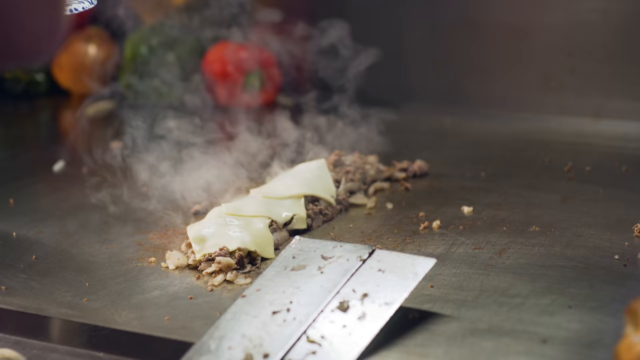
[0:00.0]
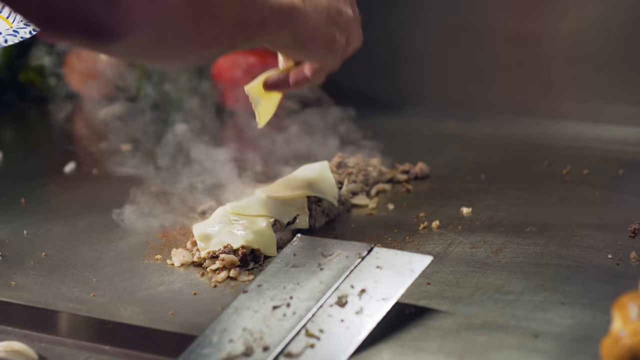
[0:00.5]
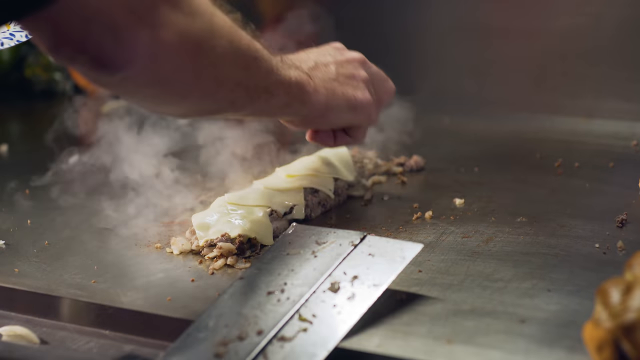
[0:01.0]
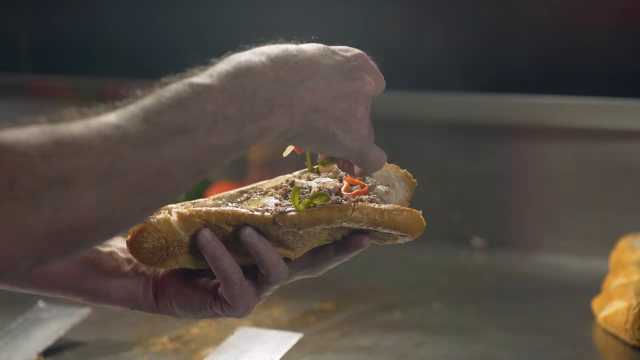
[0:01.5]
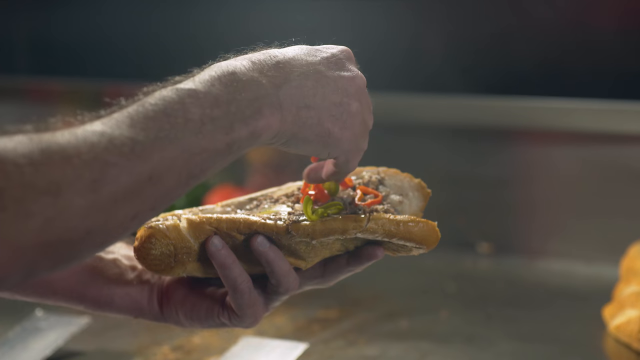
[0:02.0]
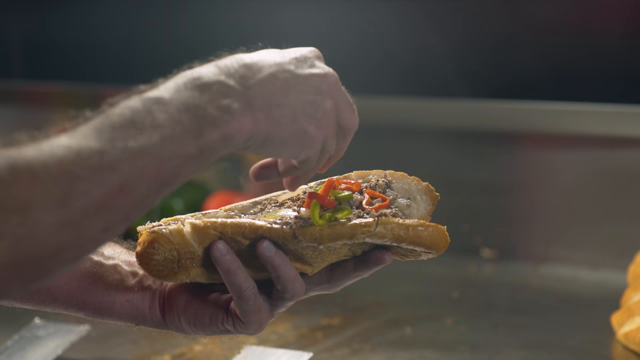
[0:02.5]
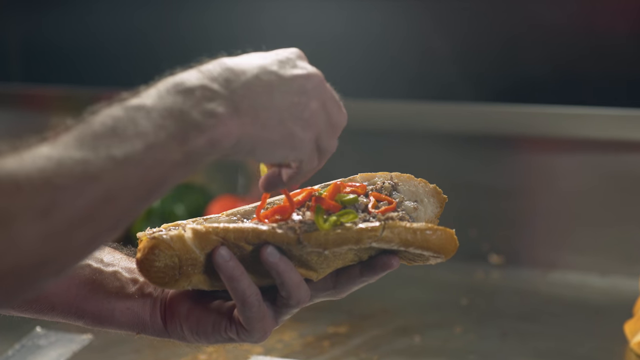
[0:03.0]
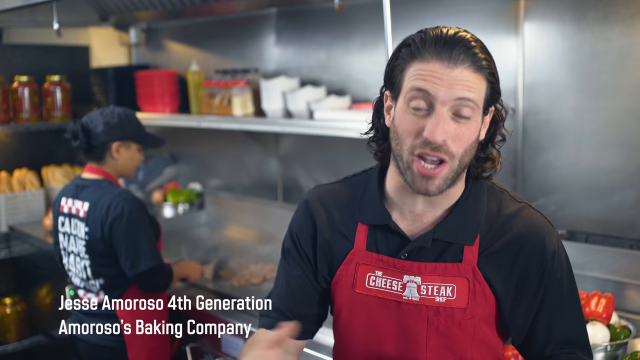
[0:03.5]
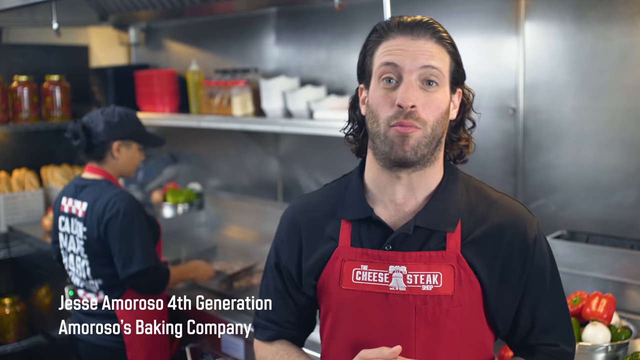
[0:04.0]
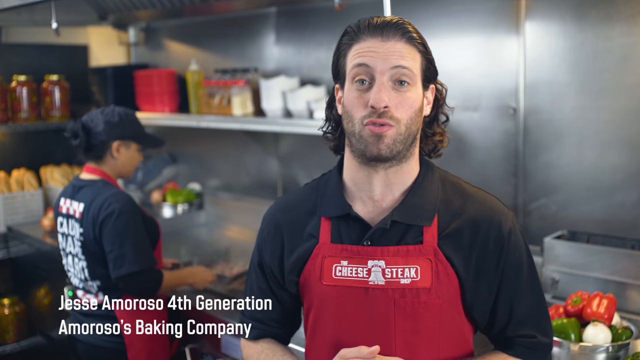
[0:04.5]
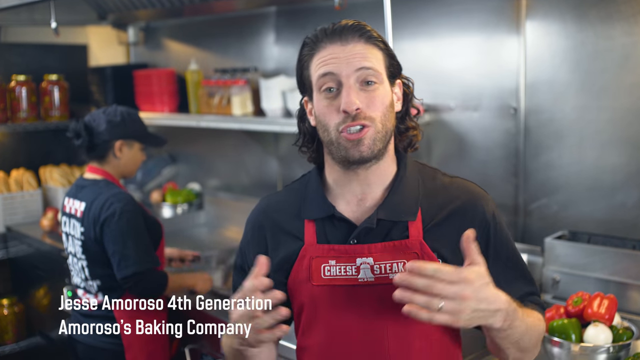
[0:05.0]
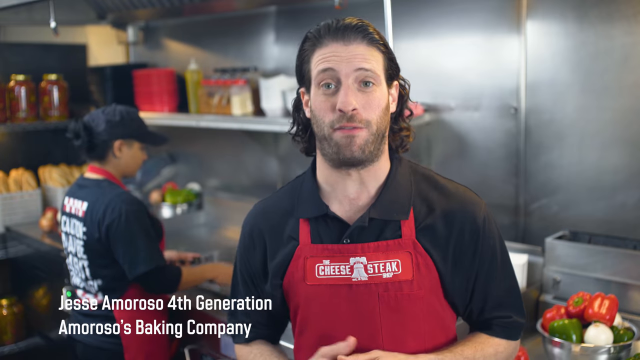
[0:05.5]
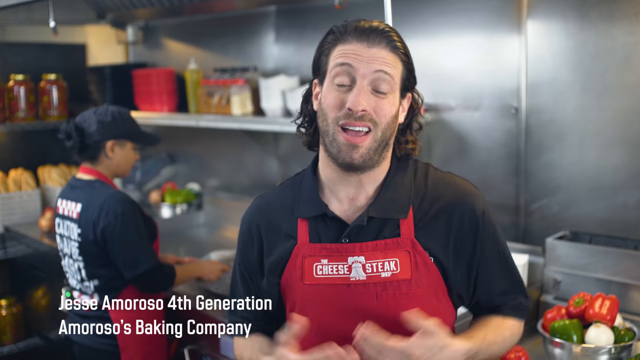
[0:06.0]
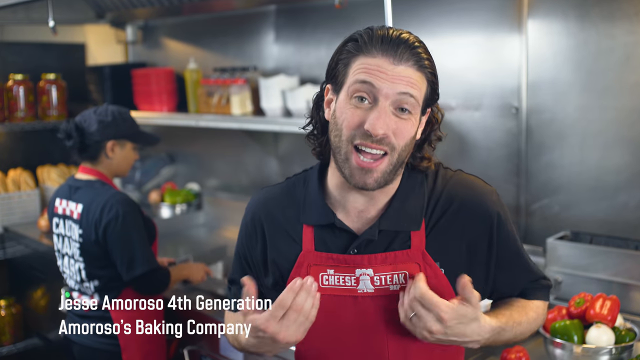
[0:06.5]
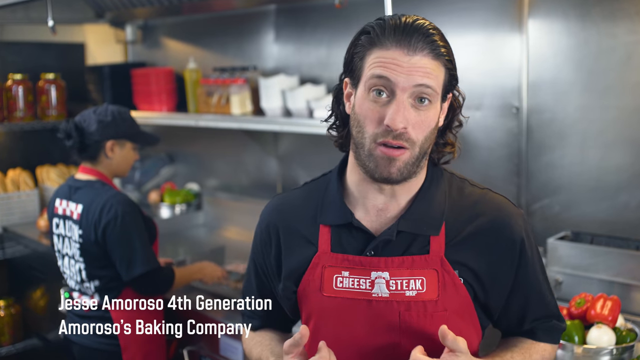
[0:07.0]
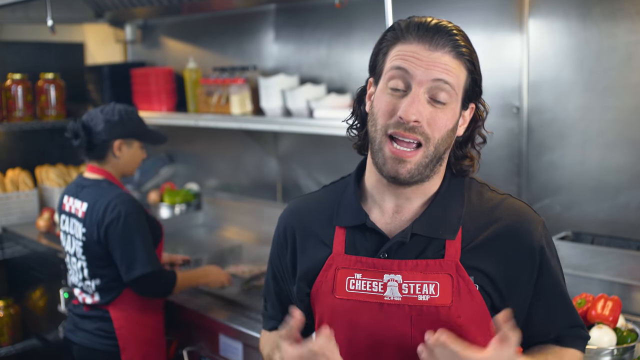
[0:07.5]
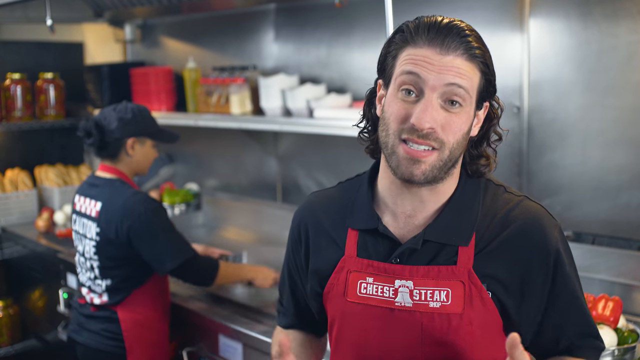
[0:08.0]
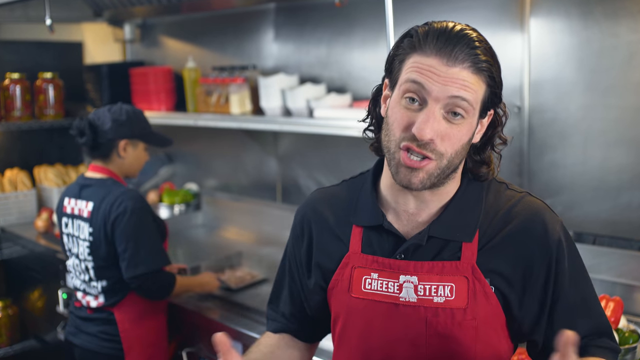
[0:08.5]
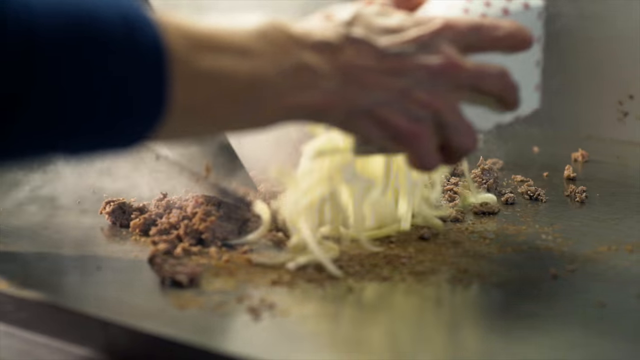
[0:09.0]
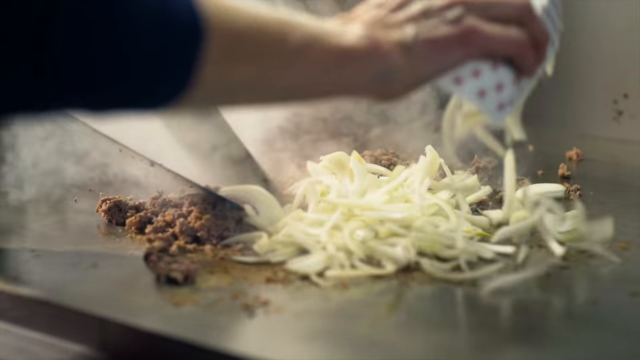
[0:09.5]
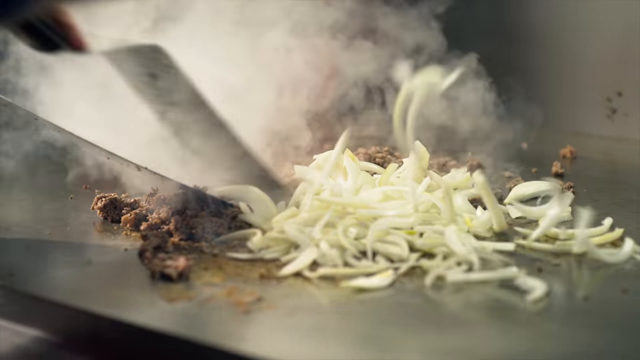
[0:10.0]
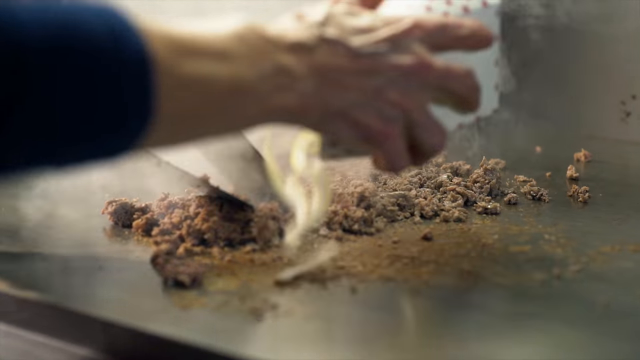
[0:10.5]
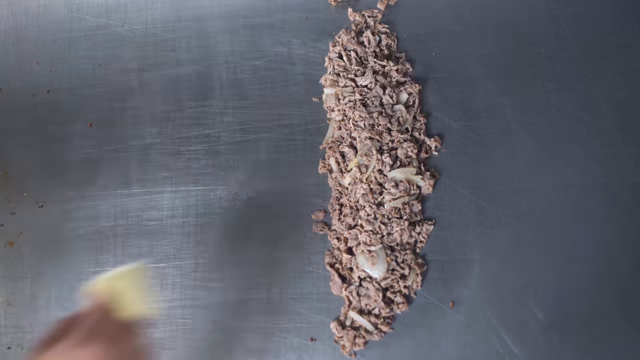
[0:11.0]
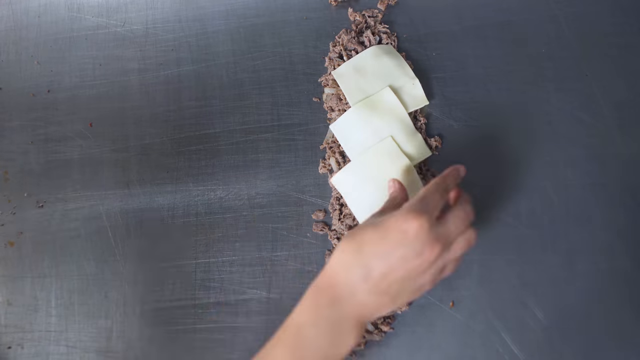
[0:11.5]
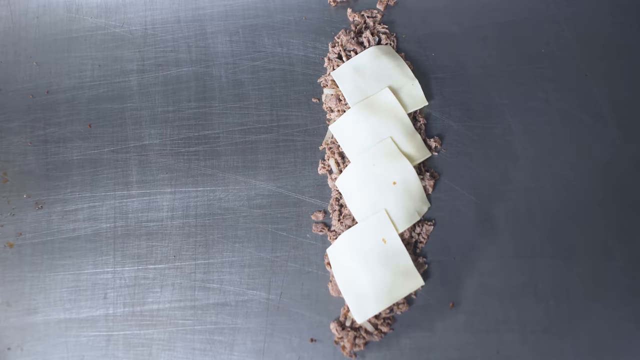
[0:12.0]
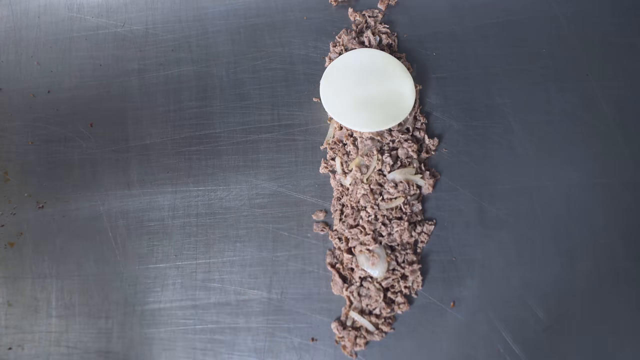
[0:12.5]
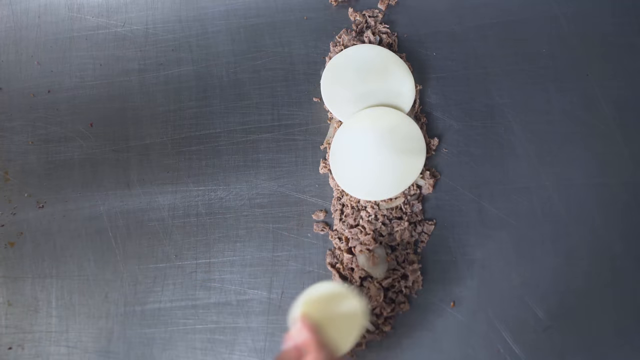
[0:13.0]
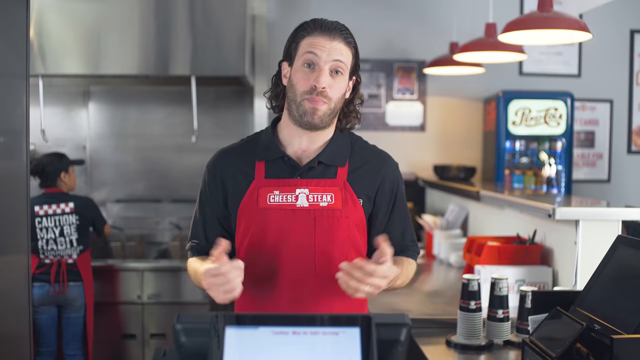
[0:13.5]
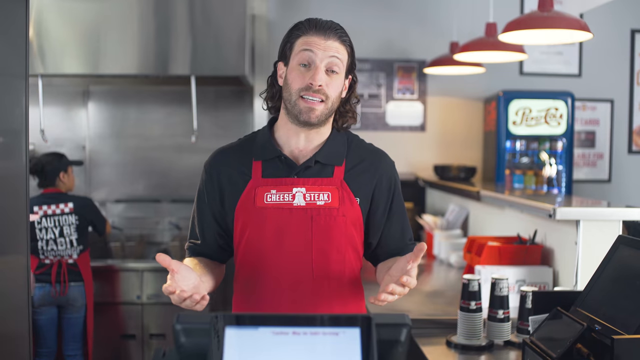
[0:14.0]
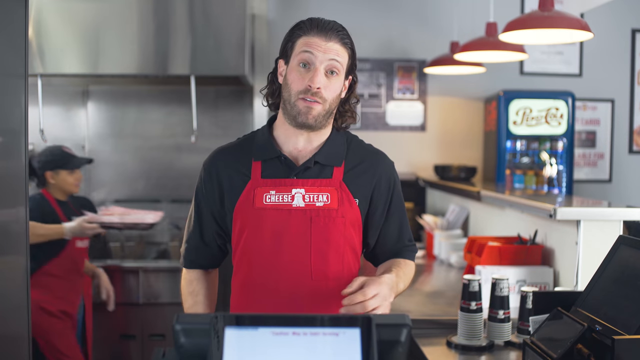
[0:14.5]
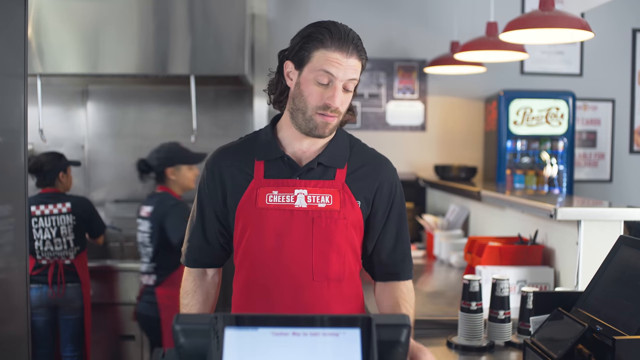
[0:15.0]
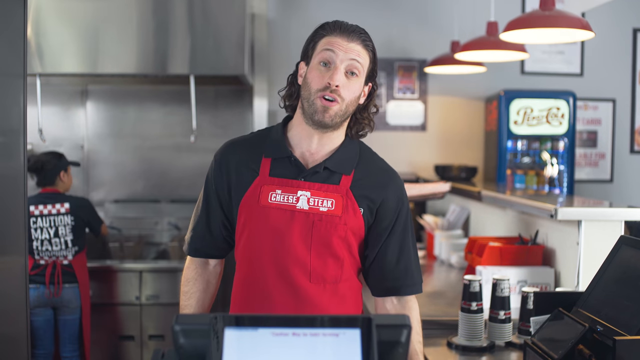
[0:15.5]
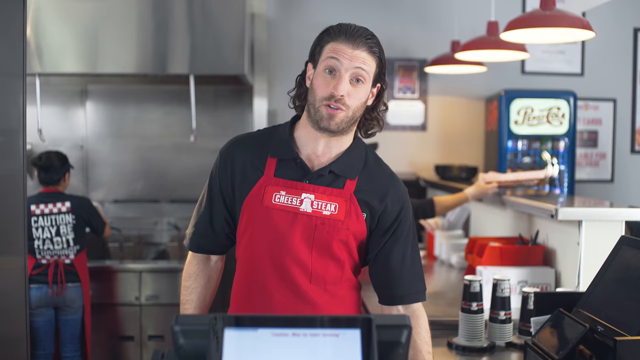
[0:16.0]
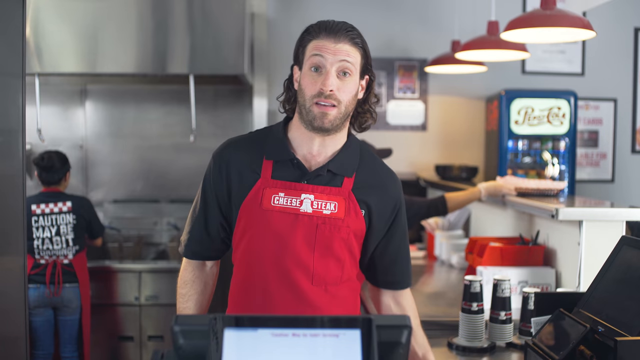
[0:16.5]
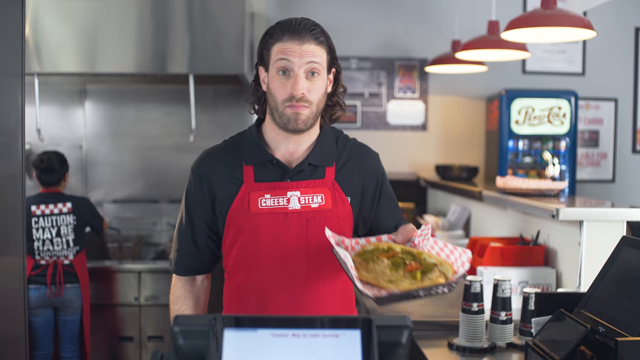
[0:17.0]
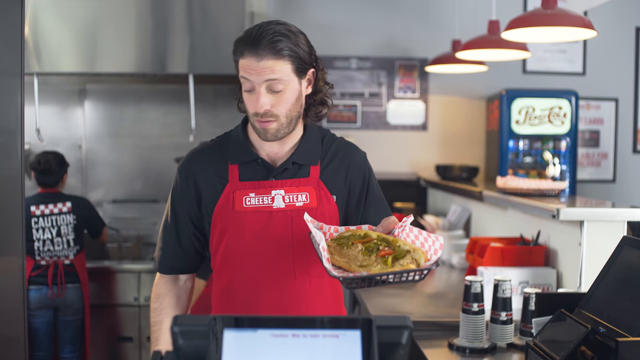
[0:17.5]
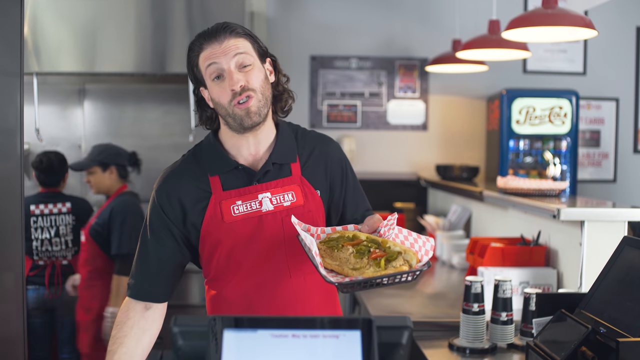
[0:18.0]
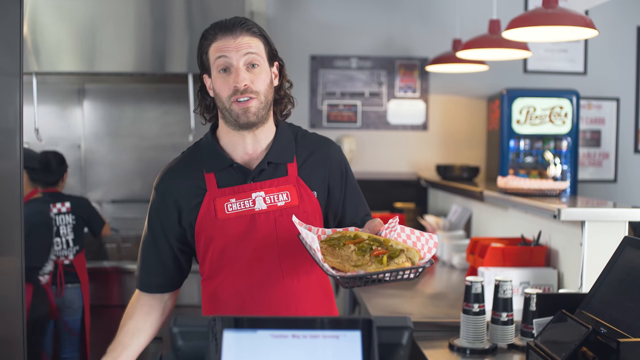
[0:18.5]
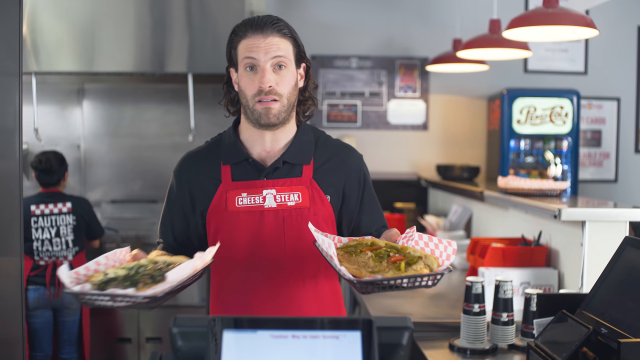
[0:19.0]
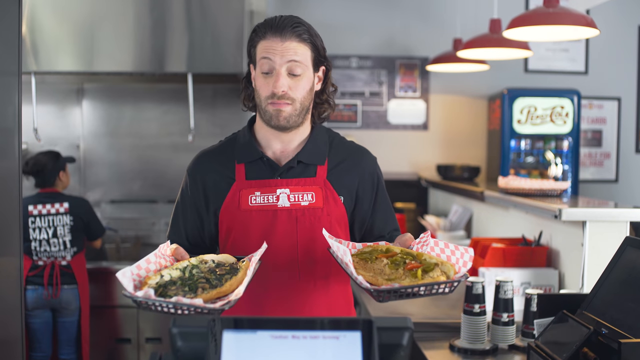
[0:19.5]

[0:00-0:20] An old man is cooking food. First he takes cheese slices and puts them on top of the meat on the table. He then takes a slice of bread with some meat and adds peri-peri on top of the bread. In the next shot, the man is in the kitchen with a woman; both wear black t-shirts and red aprons with "cheese steak" written on them. Text on the screen includes "fourth generation Amarosa baking company". The man looks directly at the camera; he has long brown hair. Later, four pieces of cheese are put on top of the meat.